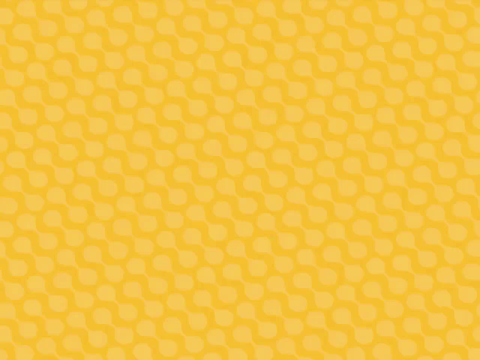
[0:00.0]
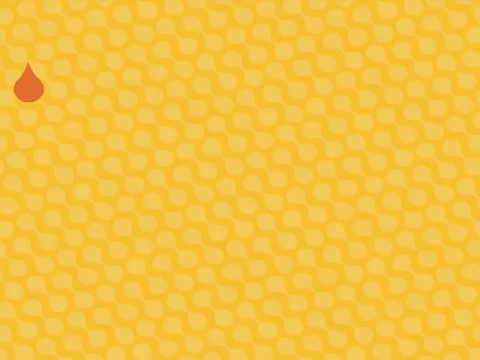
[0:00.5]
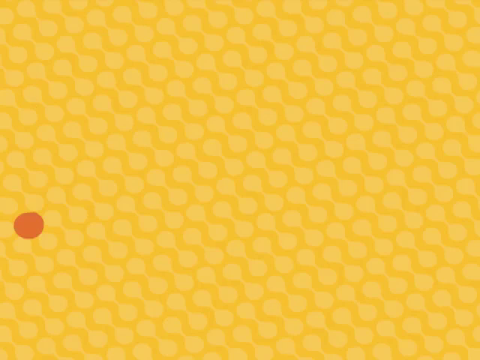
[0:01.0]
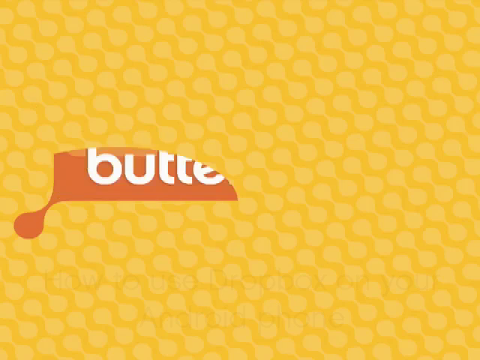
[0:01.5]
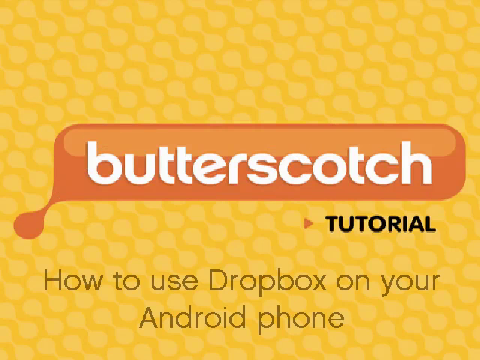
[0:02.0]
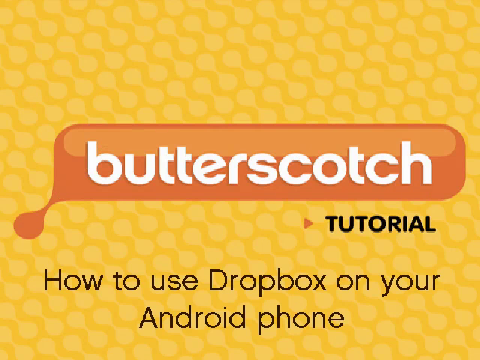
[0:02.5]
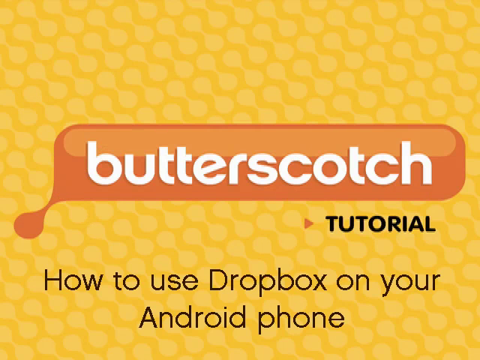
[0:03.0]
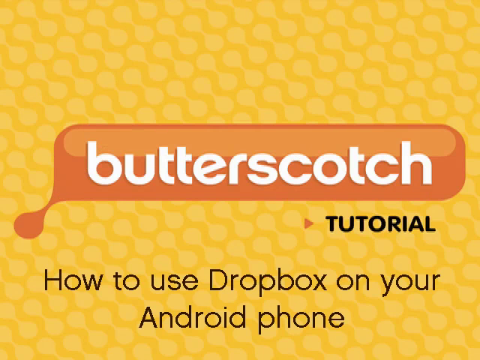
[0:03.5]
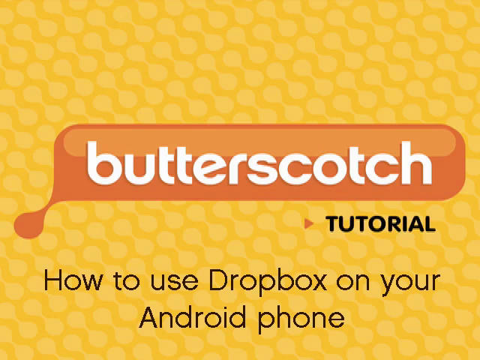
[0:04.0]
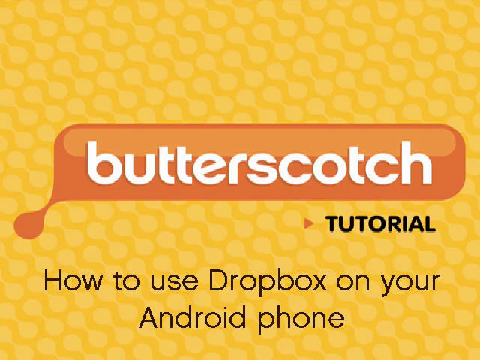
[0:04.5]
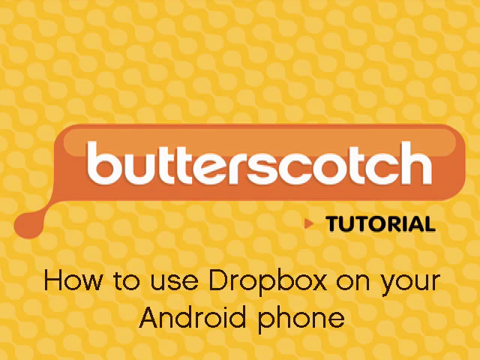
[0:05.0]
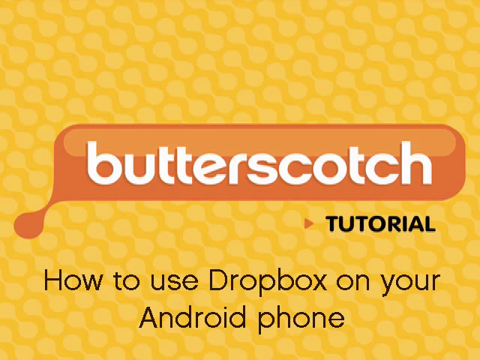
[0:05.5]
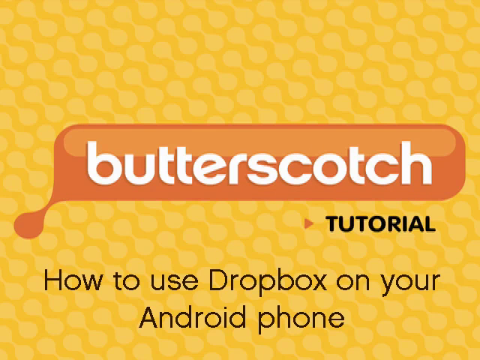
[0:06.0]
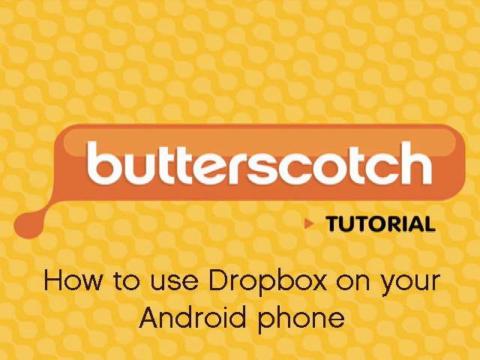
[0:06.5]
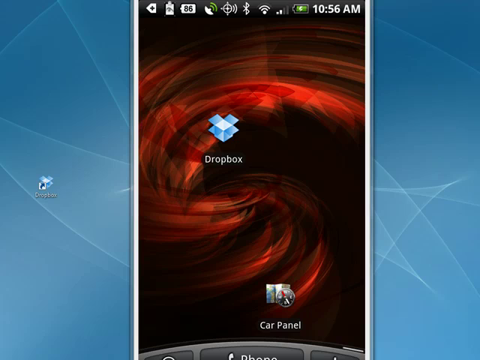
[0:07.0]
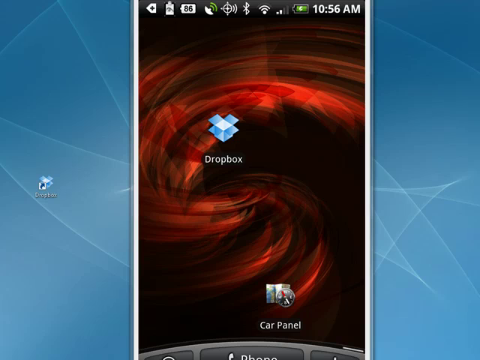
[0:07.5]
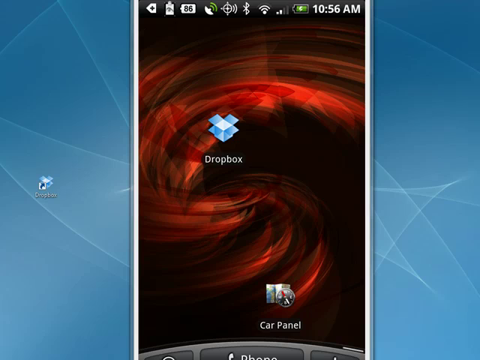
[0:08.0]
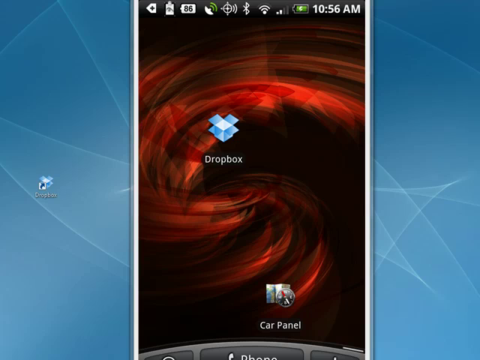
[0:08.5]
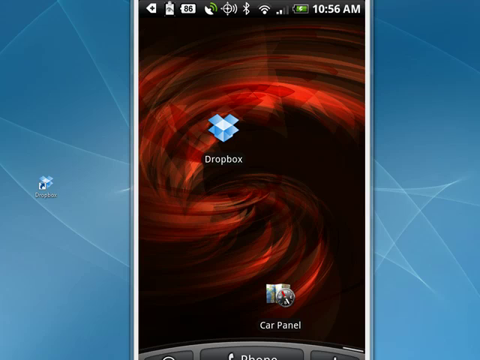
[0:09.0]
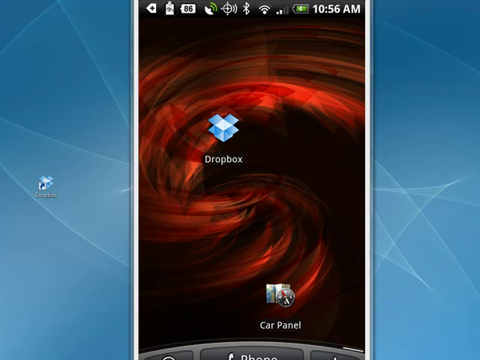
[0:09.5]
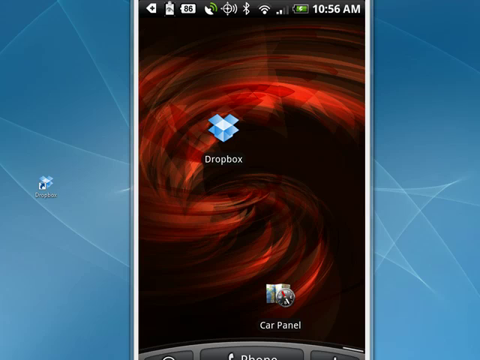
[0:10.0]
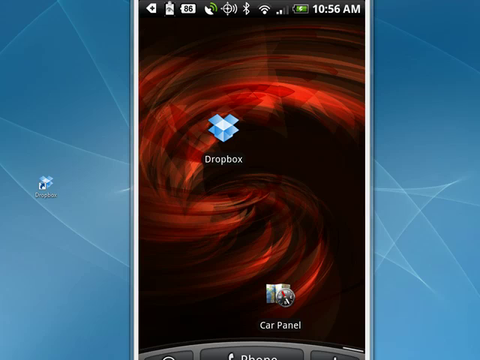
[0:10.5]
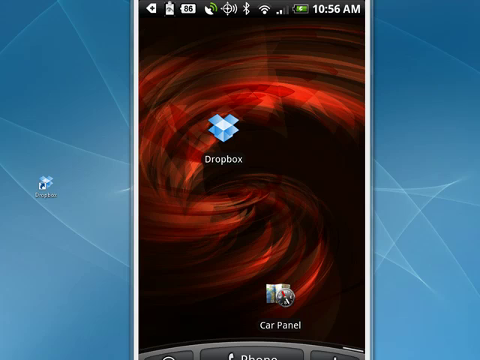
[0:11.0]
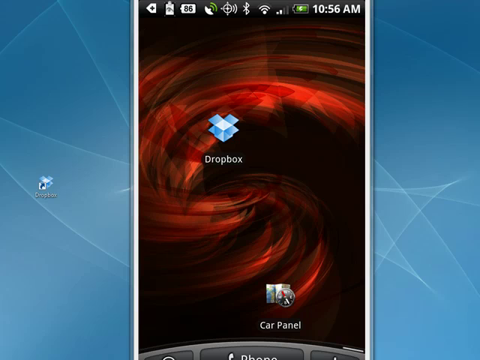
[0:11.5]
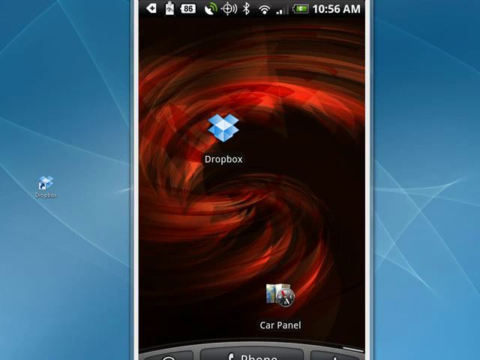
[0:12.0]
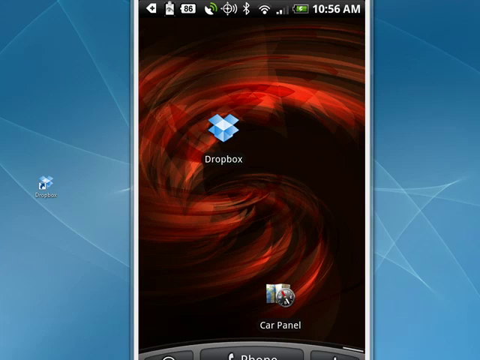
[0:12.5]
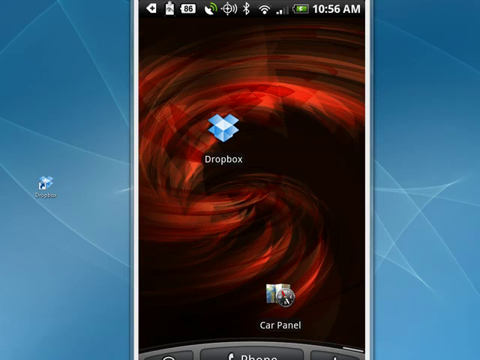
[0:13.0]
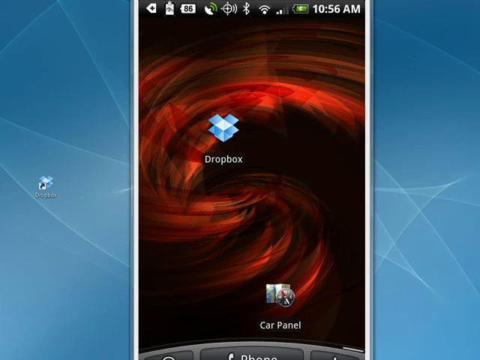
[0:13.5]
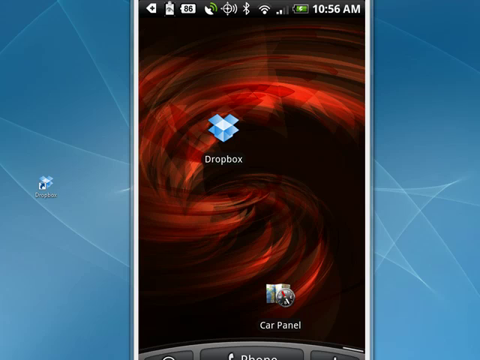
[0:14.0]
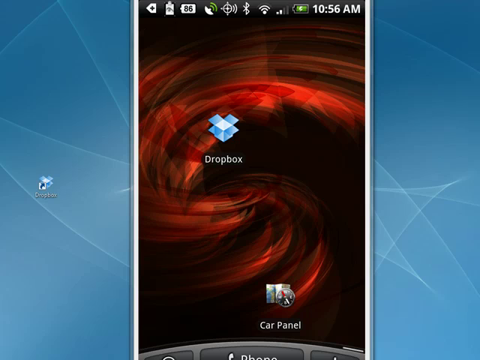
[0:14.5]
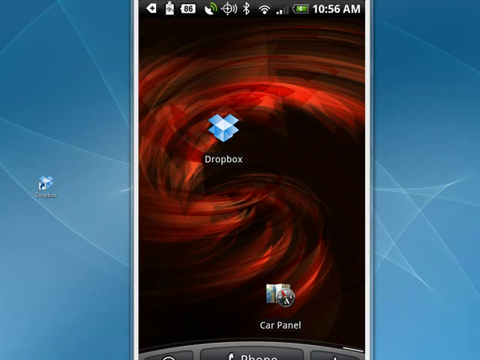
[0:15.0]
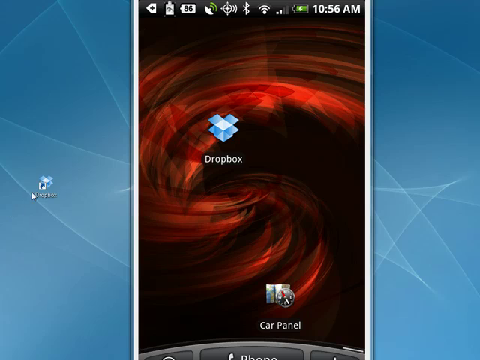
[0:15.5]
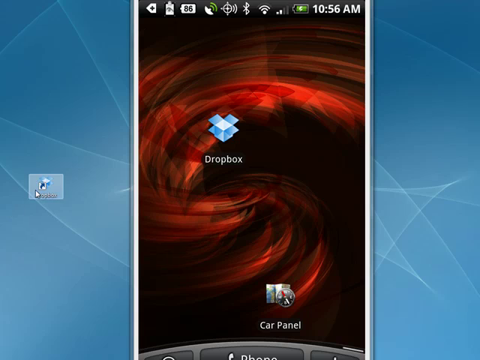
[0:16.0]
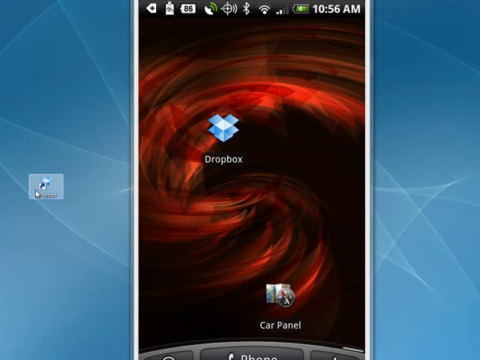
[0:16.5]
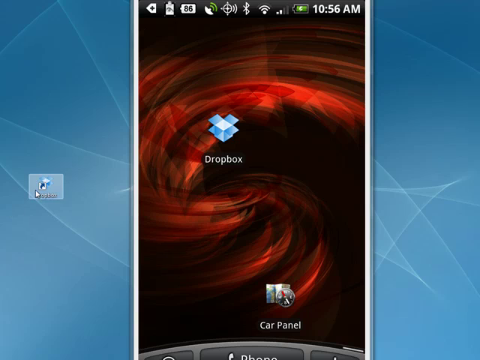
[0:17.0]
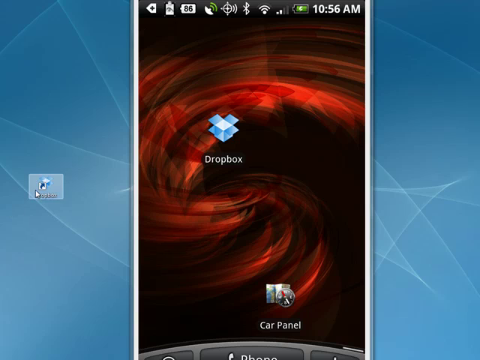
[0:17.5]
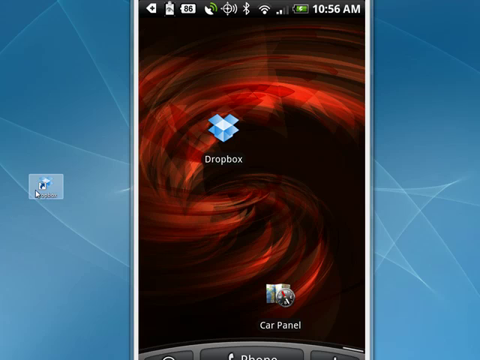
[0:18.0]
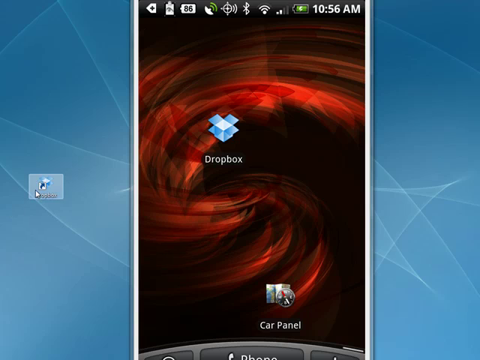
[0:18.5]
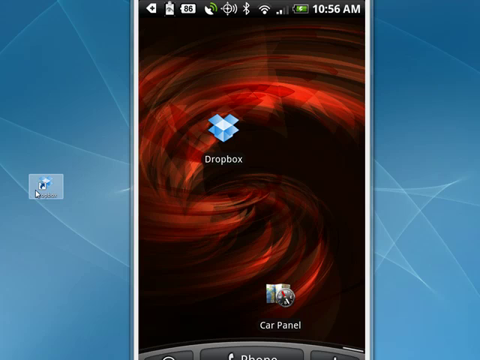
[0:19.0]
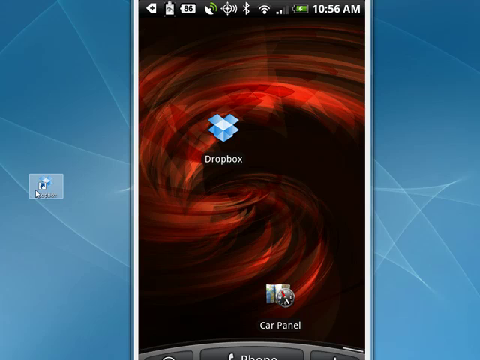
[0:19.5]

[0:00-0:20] The video opens on a dark yellow background covered in beige shapes that look like two cells connected by a thin line. Something like a dark orange drop of rain comes down on the left-hand side, hits the bottom, and expands out into what resembles a text box. In white it says "butterscotch", under it in black "tutorial", and in a different, brownish font "how to use Dropbox on your Android phone". The view then changes to what looks like someone's phone screen with two apps on it: Dropbox and CarPanel. The phone's background is black with a dark red swirl in the middle.